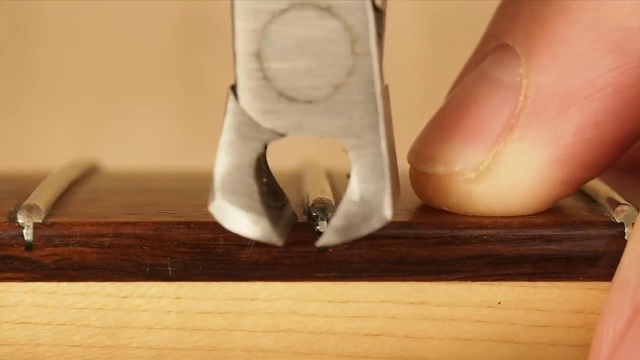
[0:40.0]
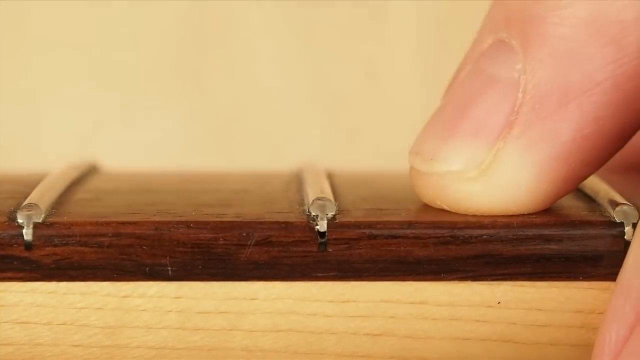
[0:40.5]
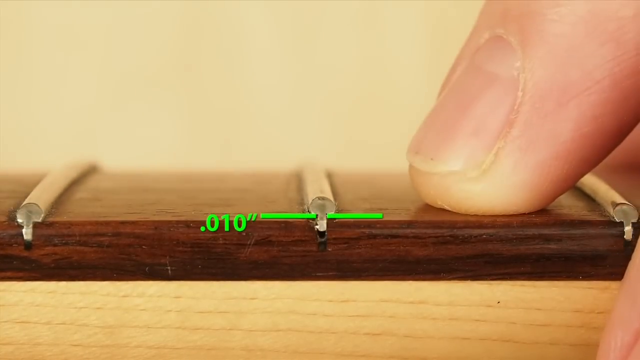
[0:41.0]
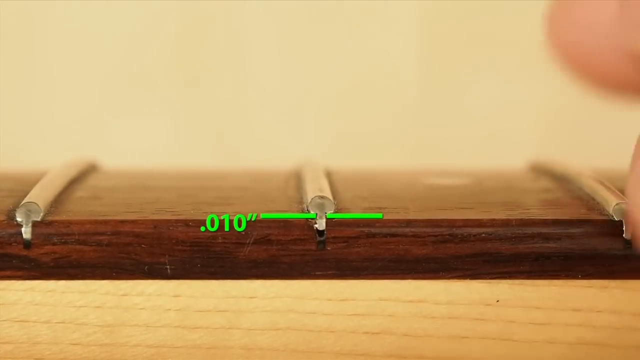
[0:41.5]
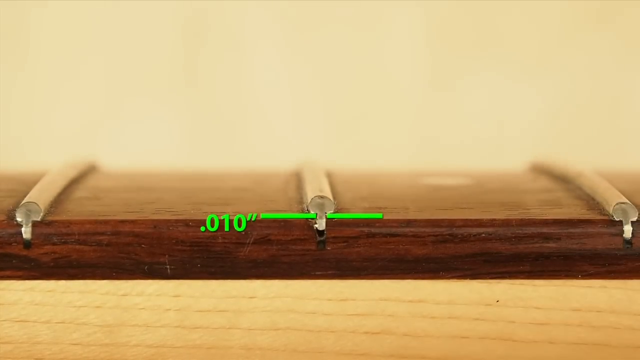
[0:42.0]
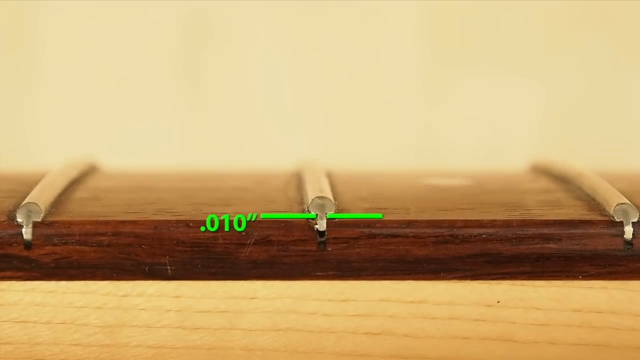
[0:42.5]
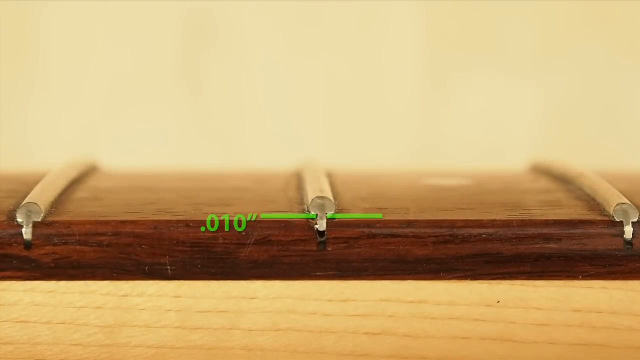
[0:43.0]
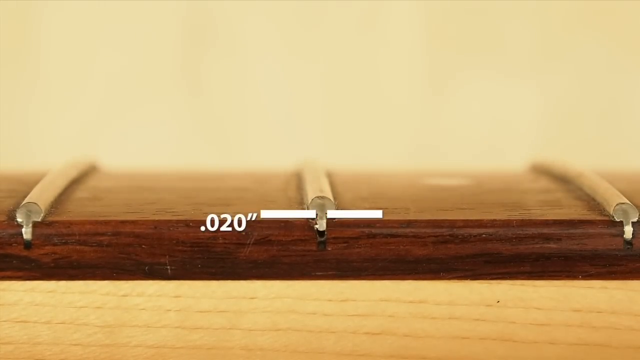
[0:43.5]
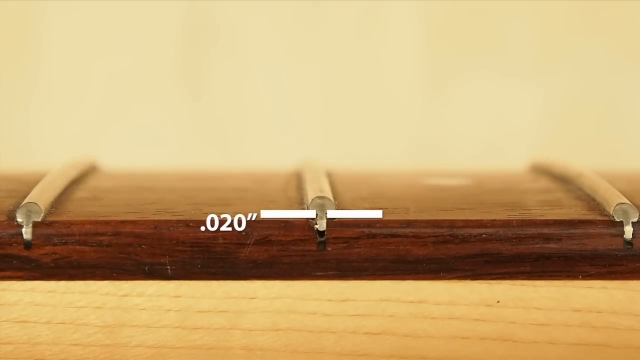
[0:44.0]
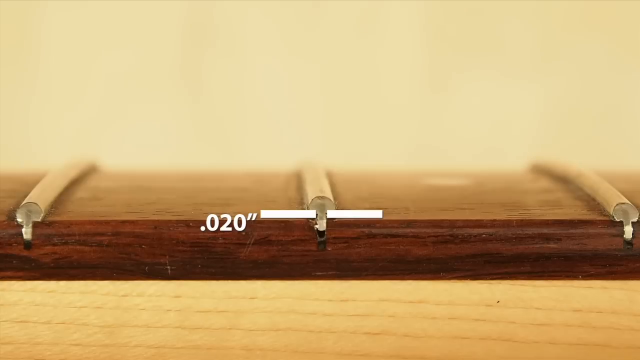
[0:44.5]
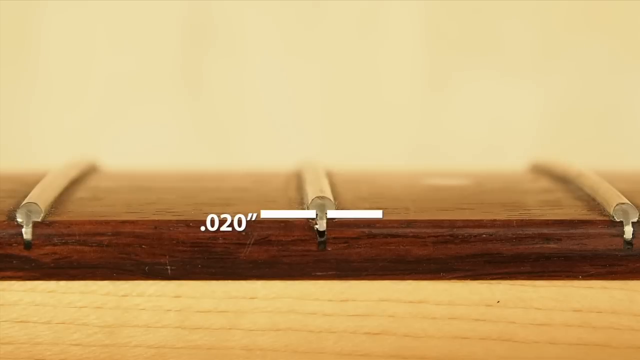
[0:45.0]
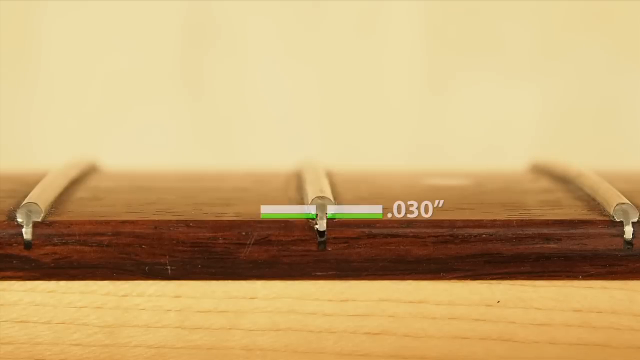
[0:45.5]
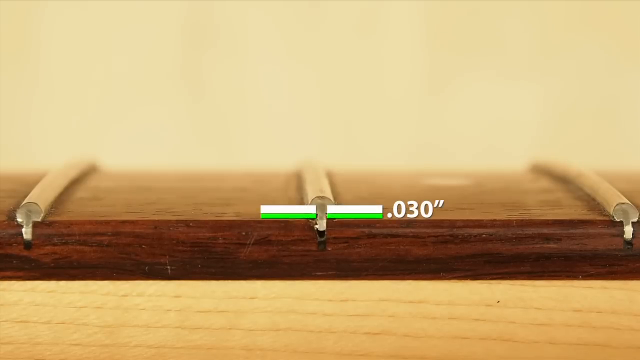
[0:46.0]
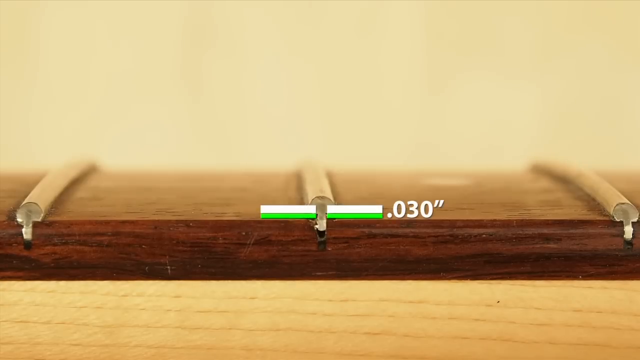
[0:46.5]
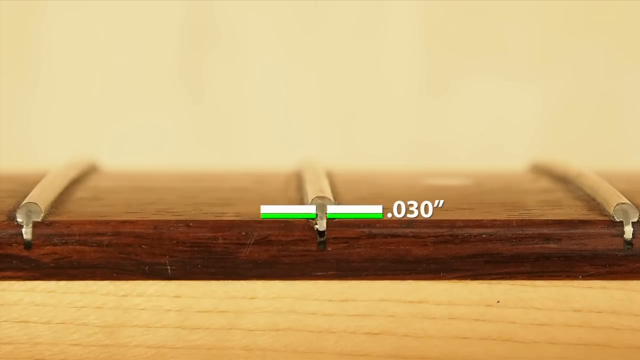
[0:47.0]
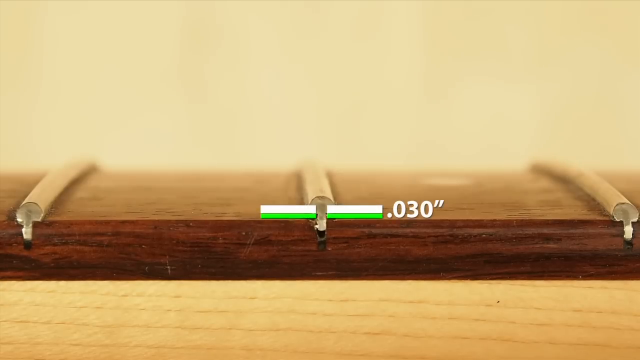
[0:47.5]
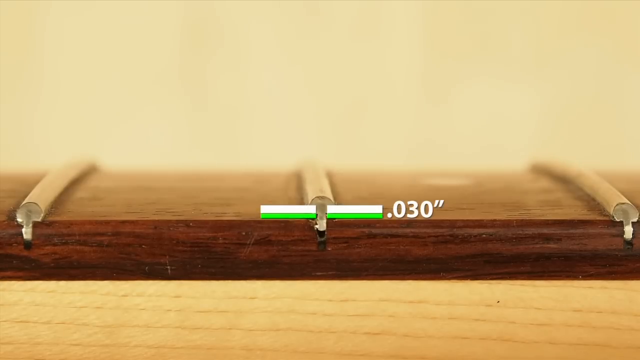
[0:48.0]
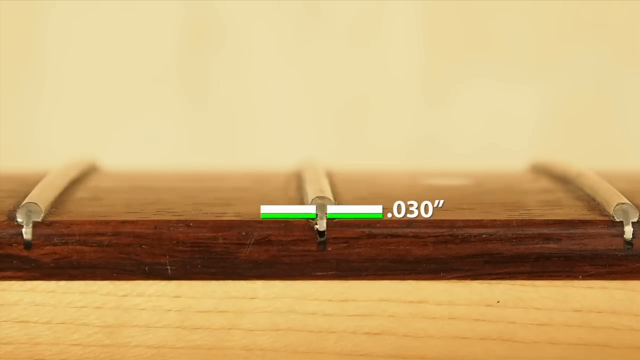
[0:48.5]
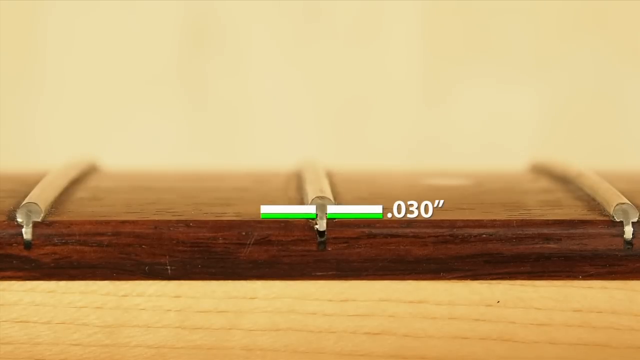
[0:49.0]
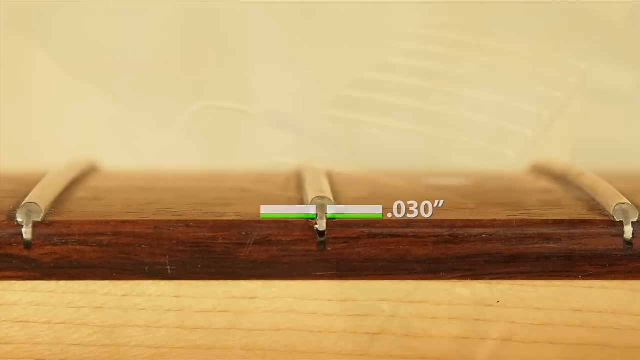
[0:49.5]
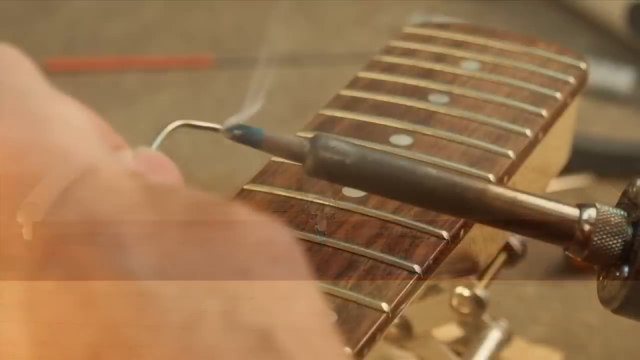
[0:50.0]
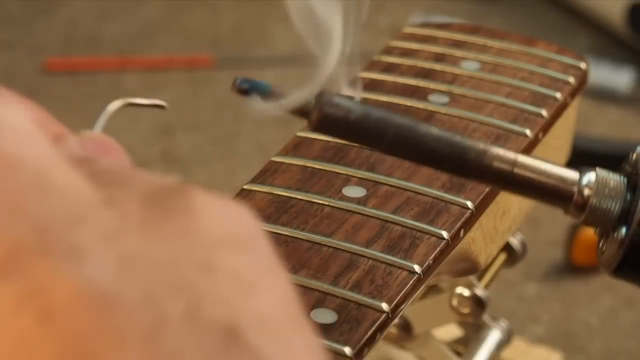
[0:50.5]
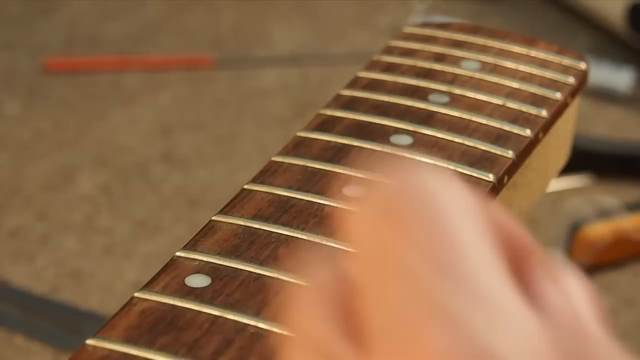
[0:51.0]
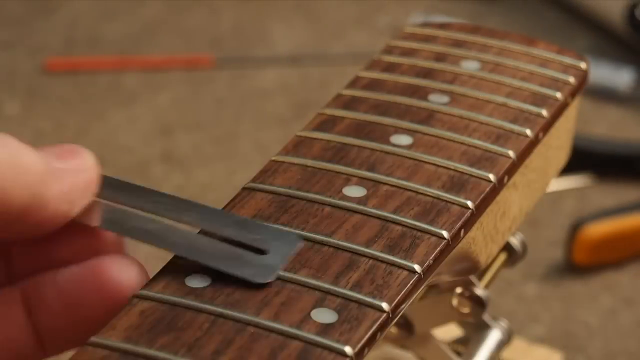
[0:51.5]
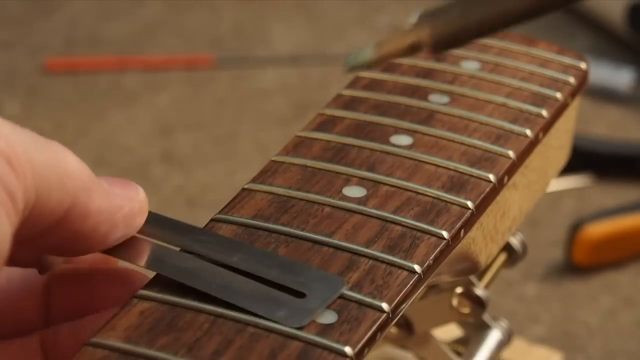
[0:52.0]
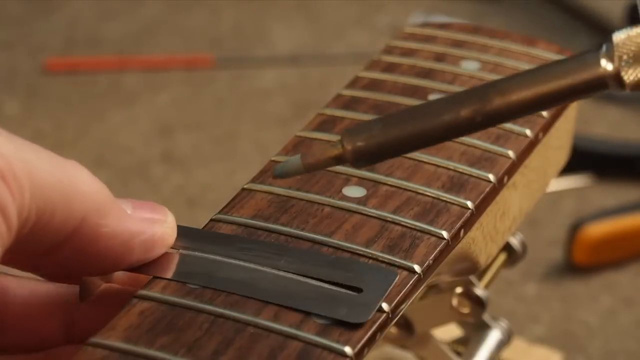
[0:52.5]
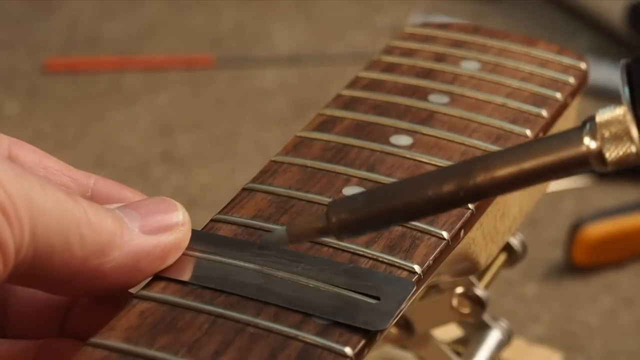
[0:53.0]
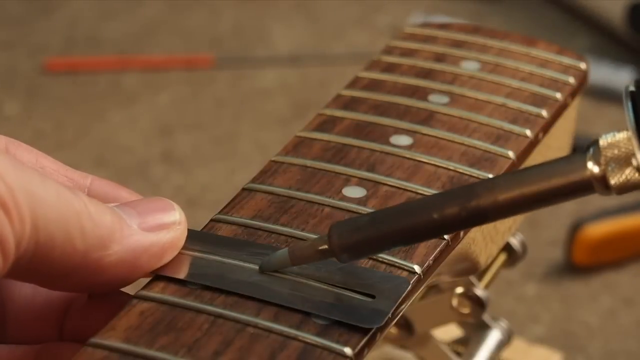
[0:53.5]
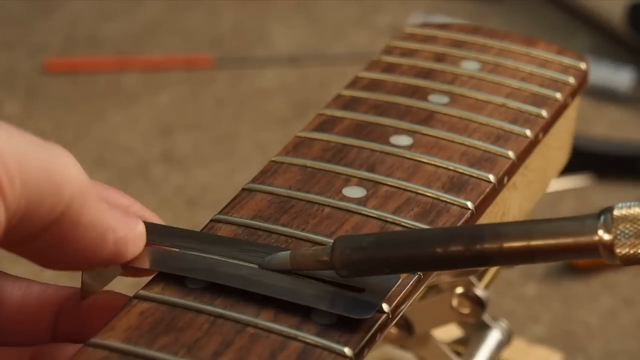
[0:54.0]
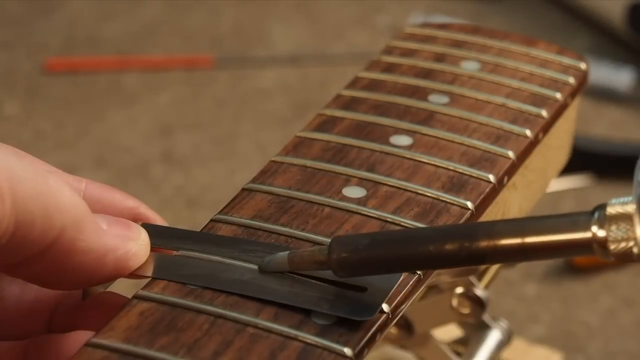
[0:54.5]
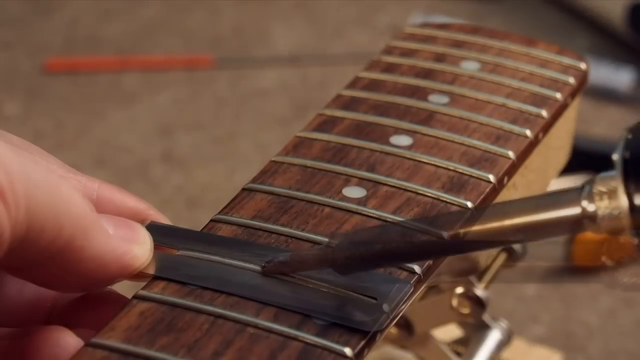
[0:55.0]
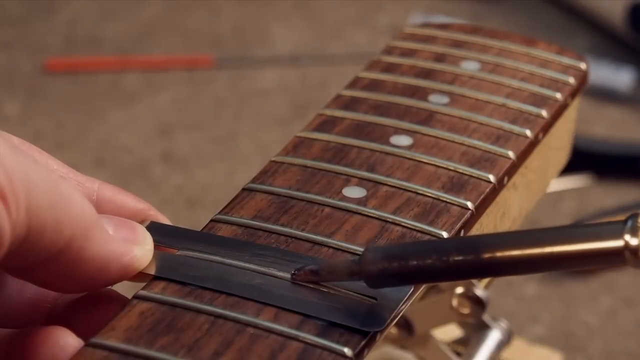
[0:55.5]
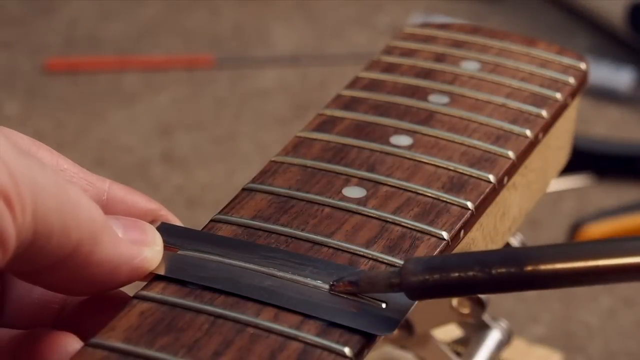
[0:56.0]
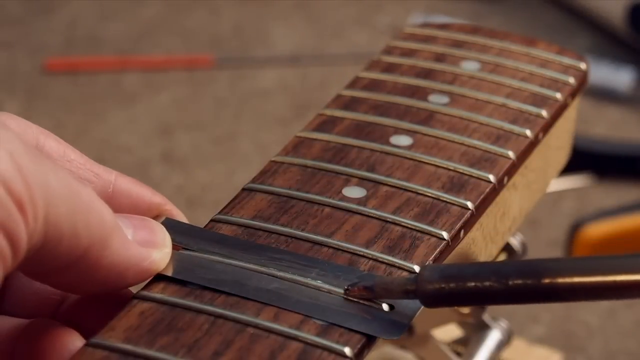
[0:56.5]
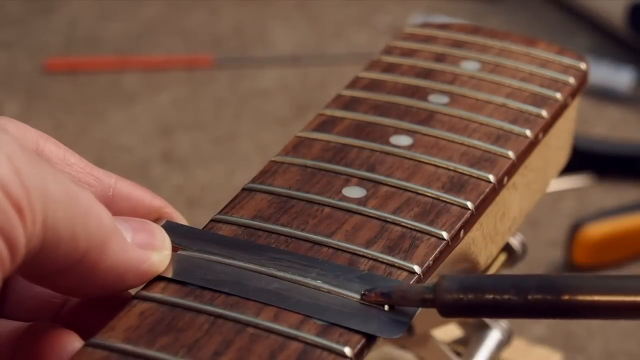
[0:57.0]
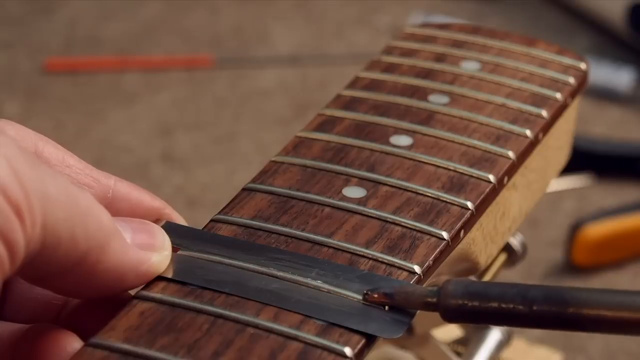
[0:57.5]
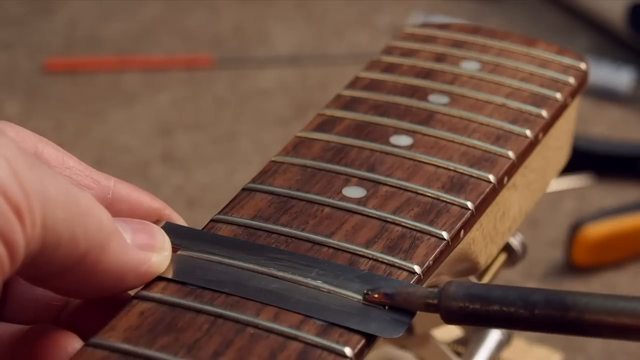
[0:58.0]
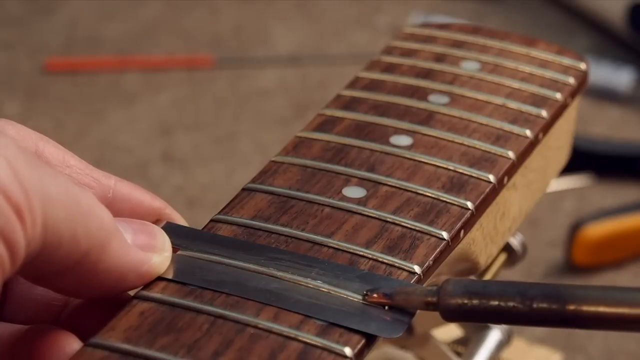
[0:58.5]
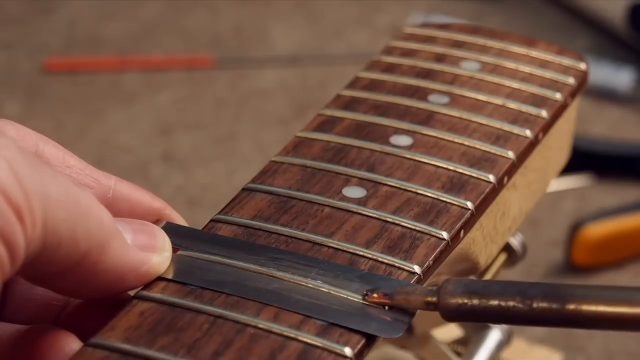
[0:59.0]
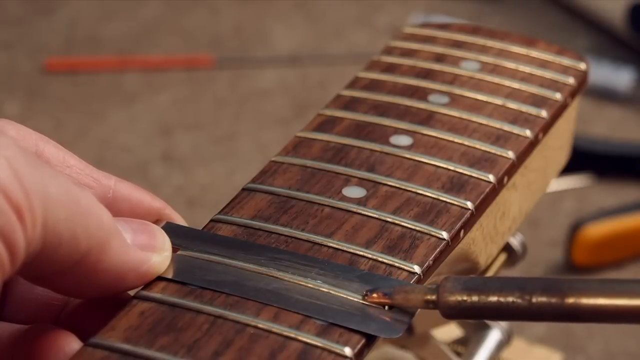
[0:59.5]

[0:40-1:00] The man is still removing the metal things. Measurements appear on screen, such as 20 inches, 10 inches and 30 inches. He then attaches the metal things to a new wooden thing, putting them on in the same way they were on the old wooden thing.